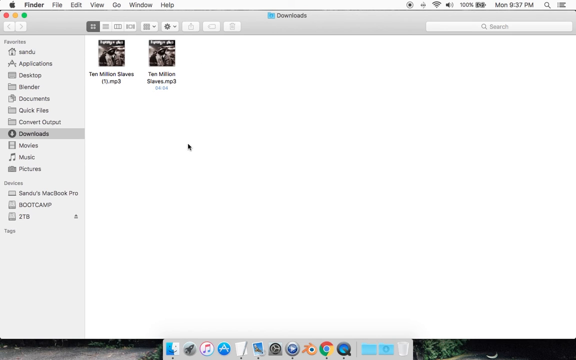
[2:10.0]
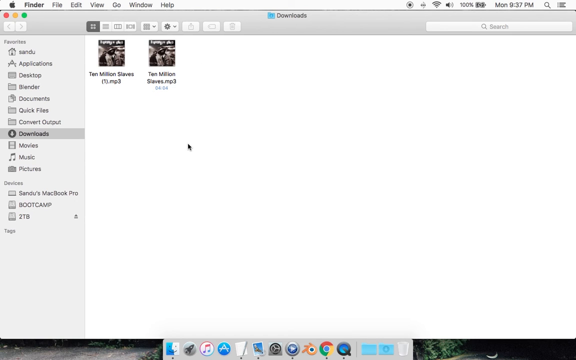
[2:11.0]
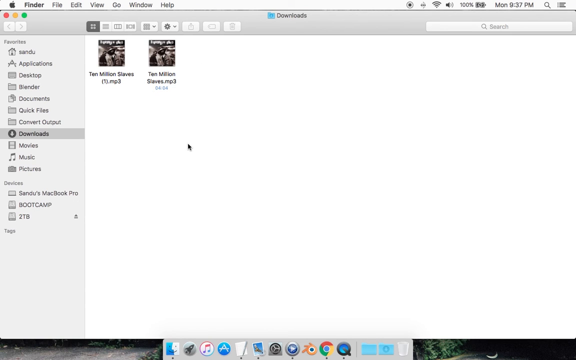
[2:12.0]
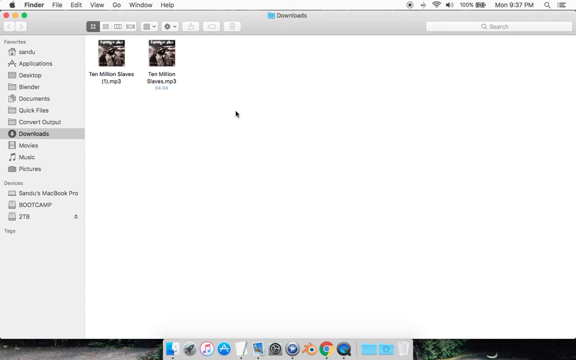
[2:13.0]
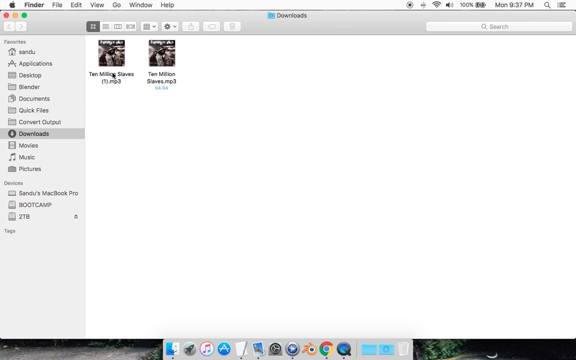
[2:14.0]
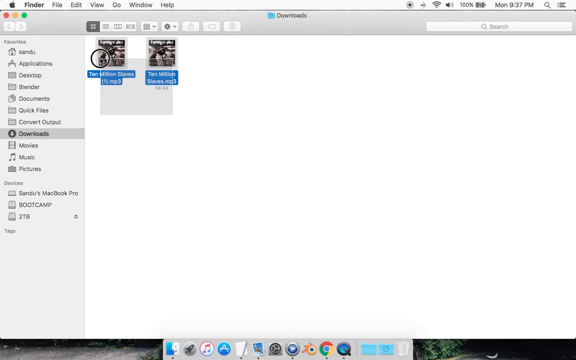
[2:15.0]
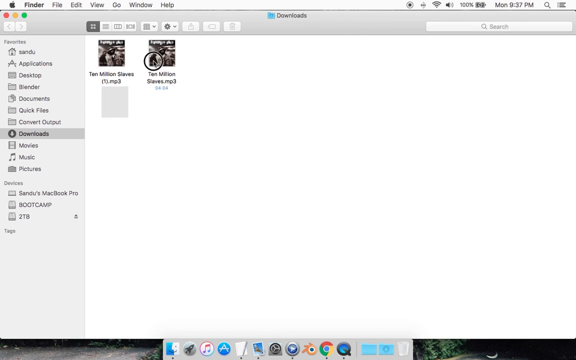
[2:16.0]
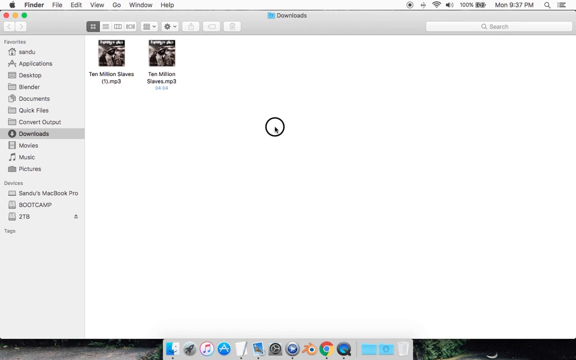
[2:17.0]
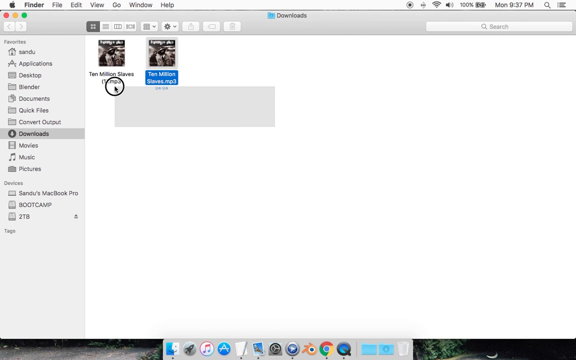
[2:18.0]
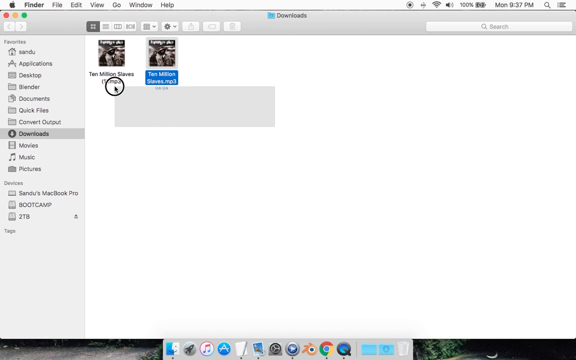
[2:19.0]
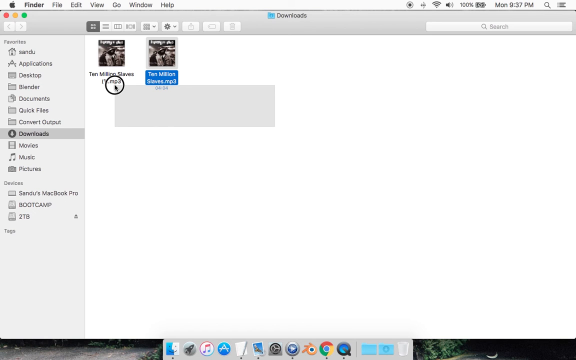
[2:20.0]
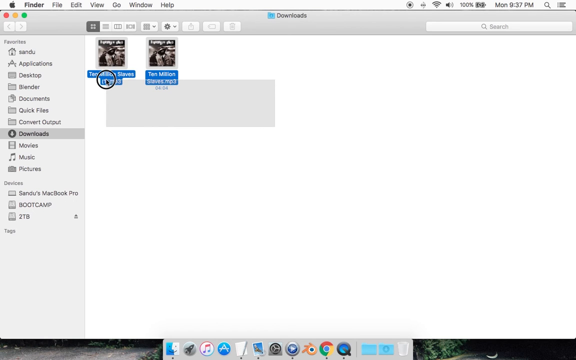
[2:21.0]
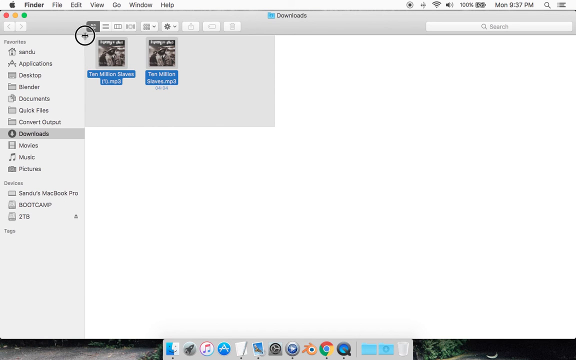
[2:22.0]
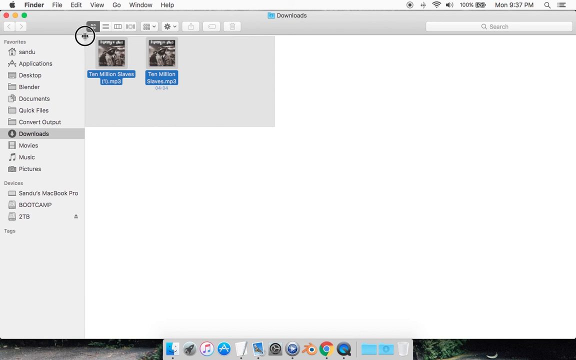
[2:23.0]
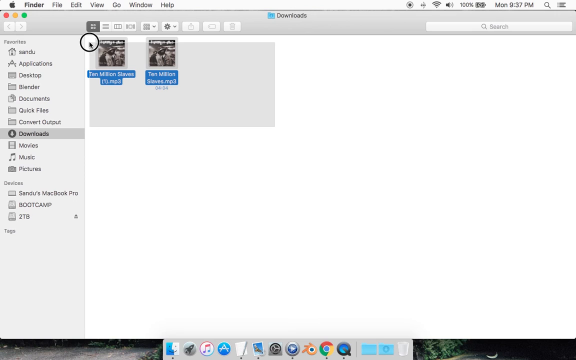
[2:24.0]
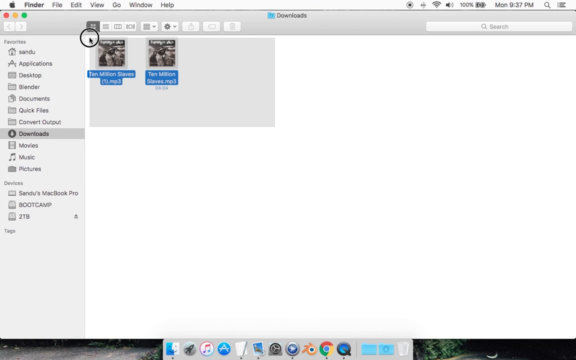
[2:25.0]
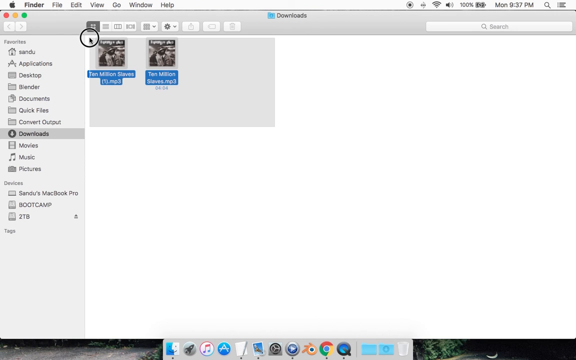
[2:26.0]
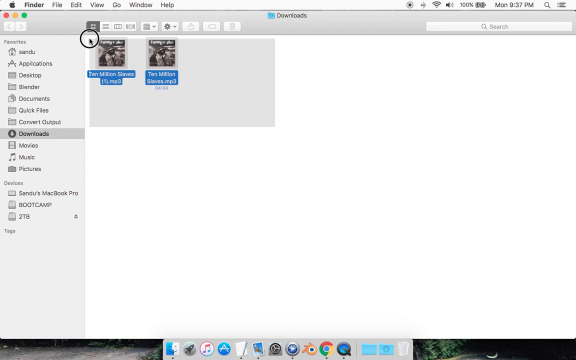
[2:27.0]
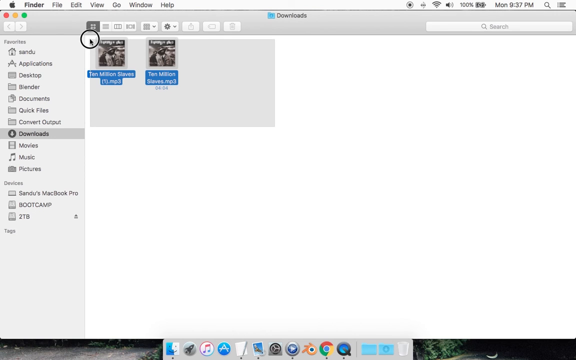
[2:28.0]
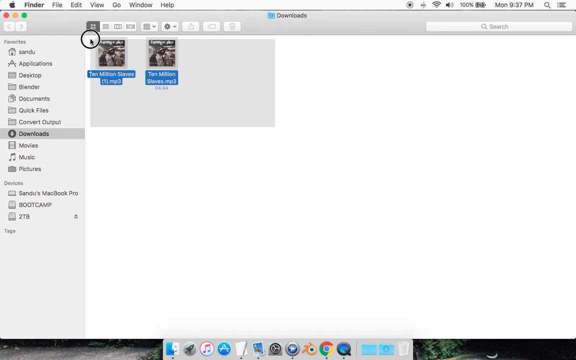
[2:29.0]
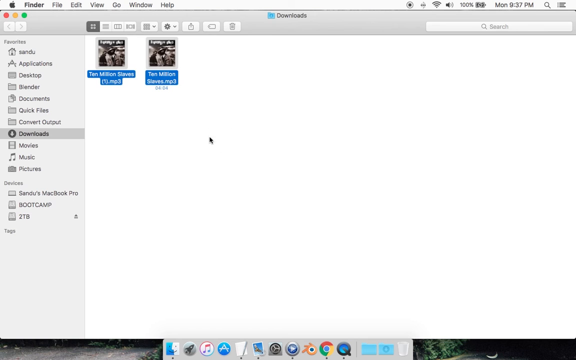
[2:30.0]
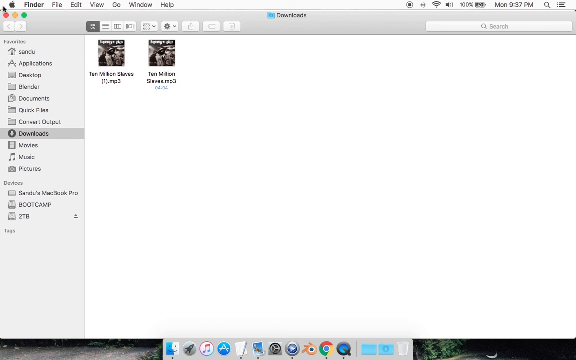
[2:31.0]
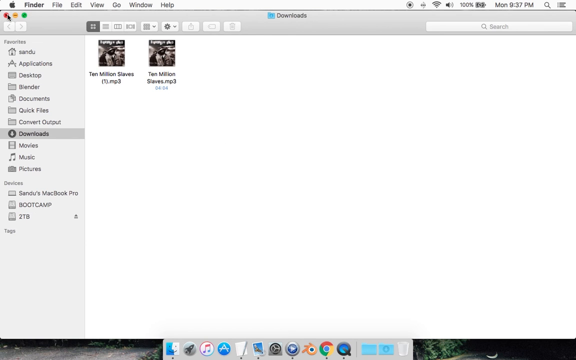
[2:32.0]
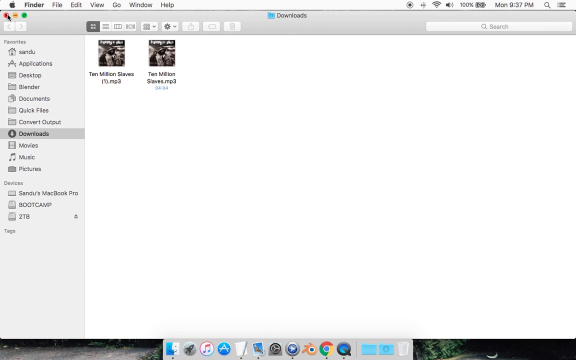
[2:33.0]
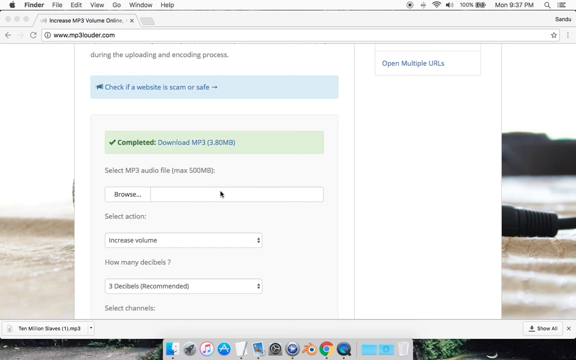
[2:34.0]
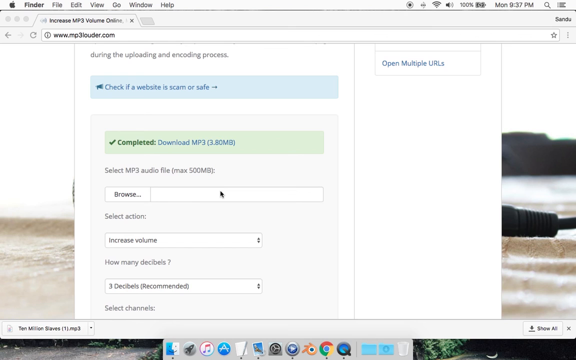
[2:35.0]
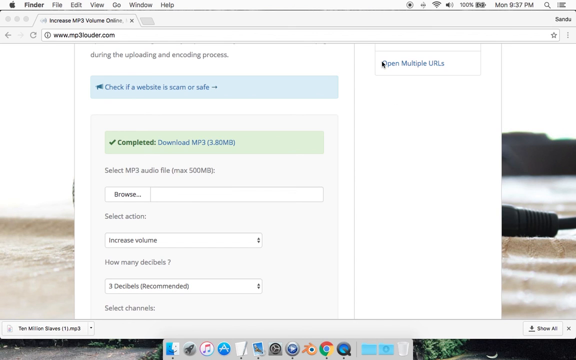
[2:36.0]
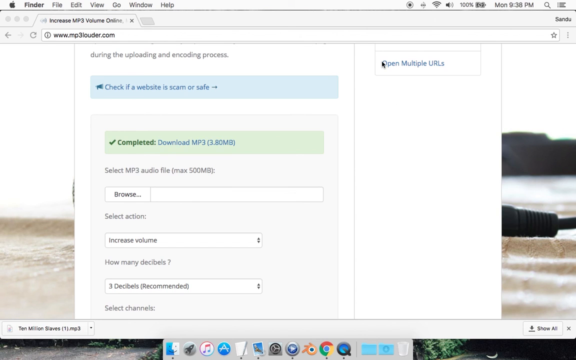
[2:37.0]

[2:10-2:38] A window shows a downloads folder containing two files titled "10 million slaves". The first file shown is a duplicate of the original, the second file, so it has a 1 in parentheses after the word "slaves". The user right-clicks on the folder background, and a menu appears with "new folder" at the top and a few options. The cursor clicks on an area of white space in the Downloads folder to clear the menu away. They then select both files, unselect them, and select them again starting from the bottom and moving up, so both files are selected and highlighted in blue. They unselect the files and, one more time, starting from the right and moving toward the left, click on the white area of the Downloads folder and drag up and to the left so both files are selected. They adjust the selection box size a bit, then unselect the files by clicking on a part of the window. Finally they click the red exit button on the top left-hand side of the screen, which takes them back to the mp3louder.com website.